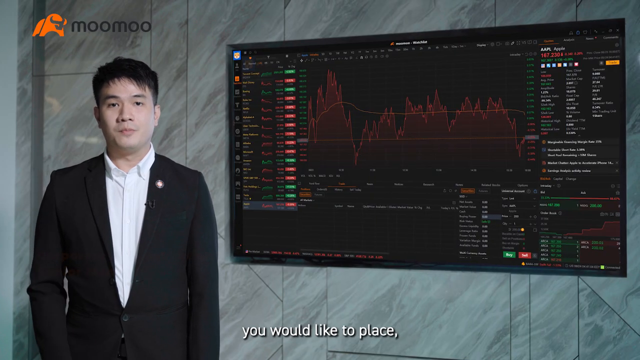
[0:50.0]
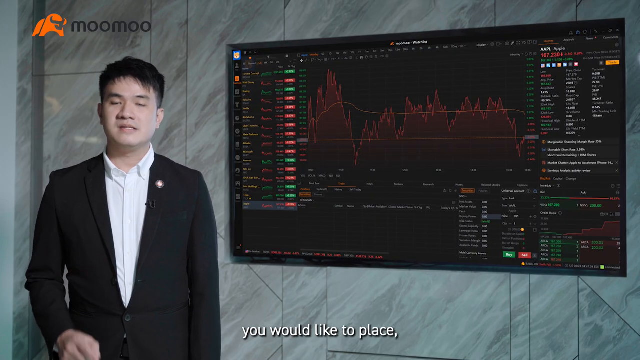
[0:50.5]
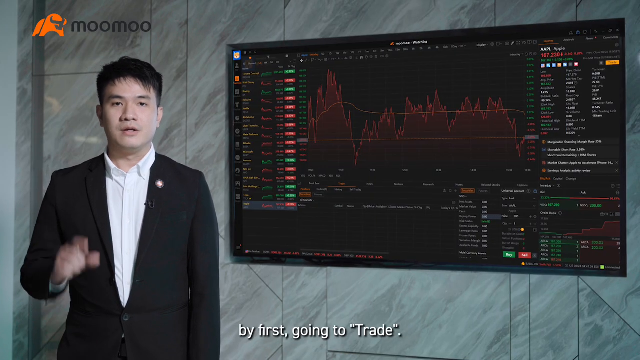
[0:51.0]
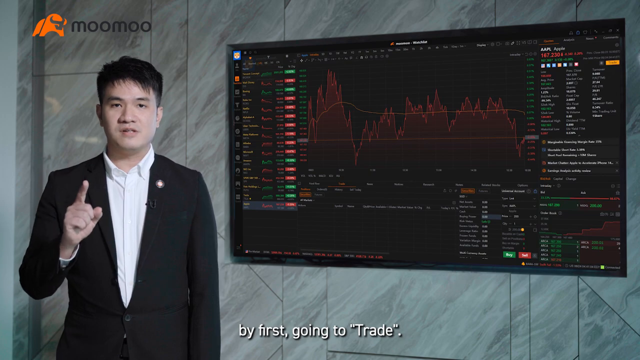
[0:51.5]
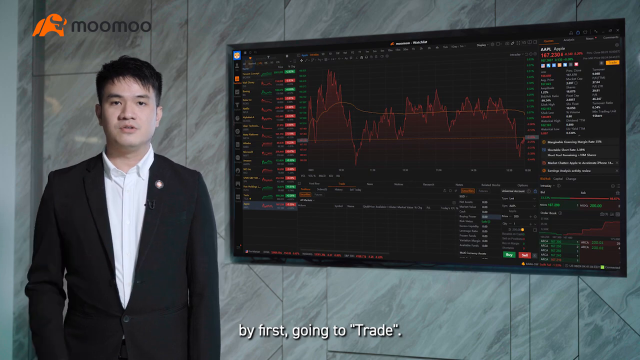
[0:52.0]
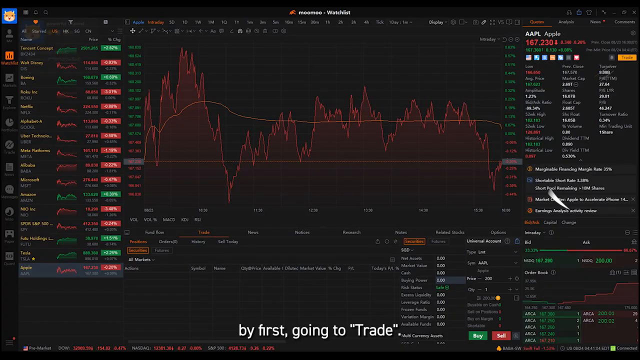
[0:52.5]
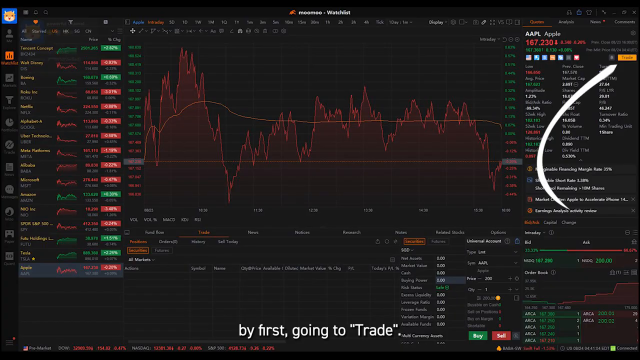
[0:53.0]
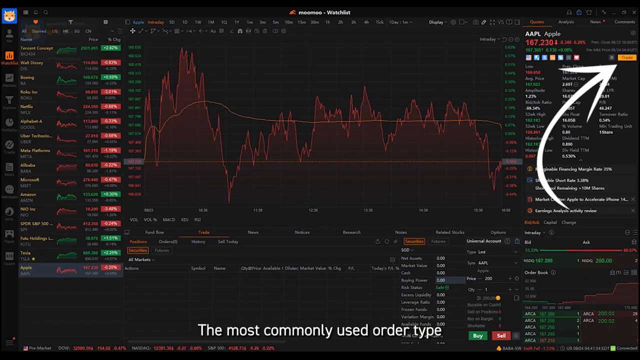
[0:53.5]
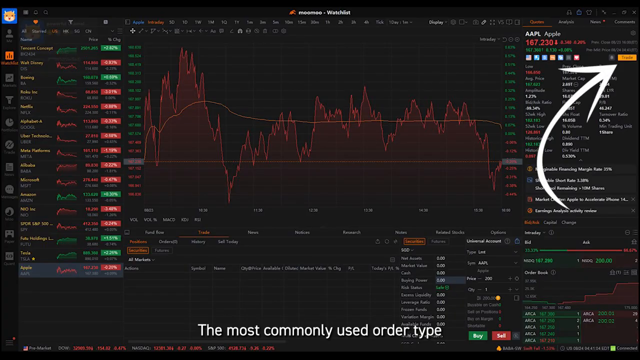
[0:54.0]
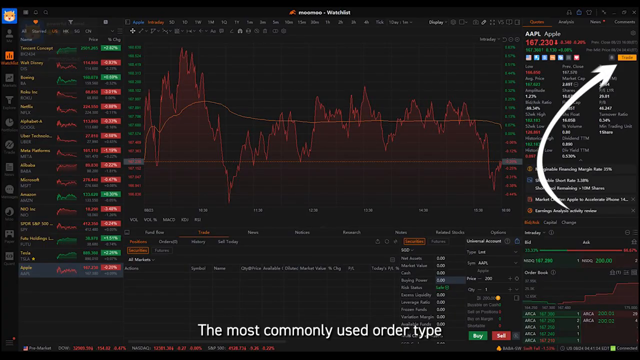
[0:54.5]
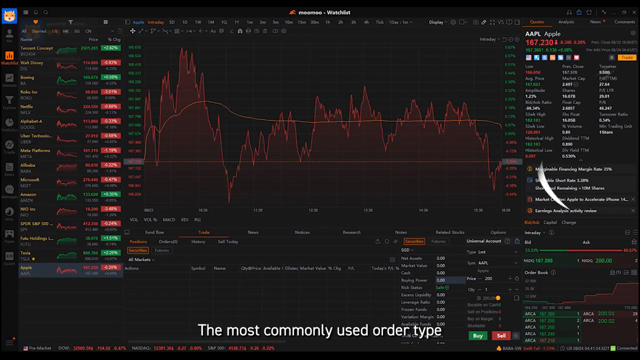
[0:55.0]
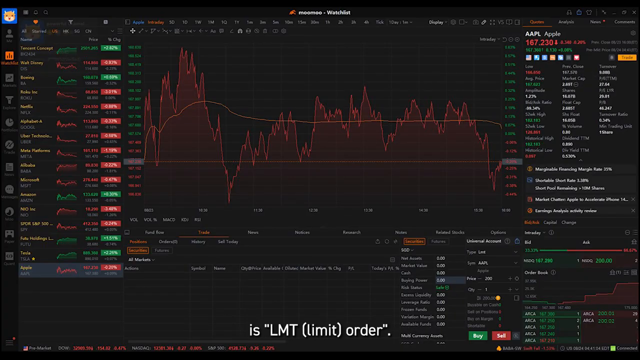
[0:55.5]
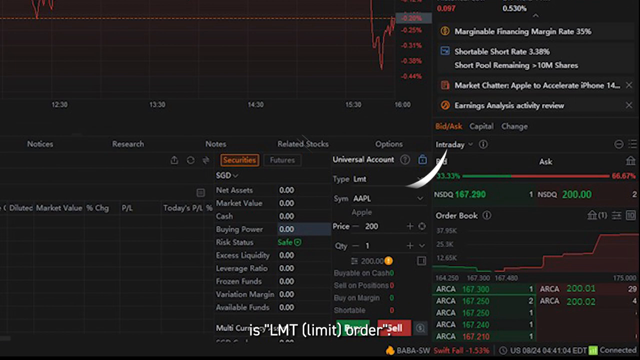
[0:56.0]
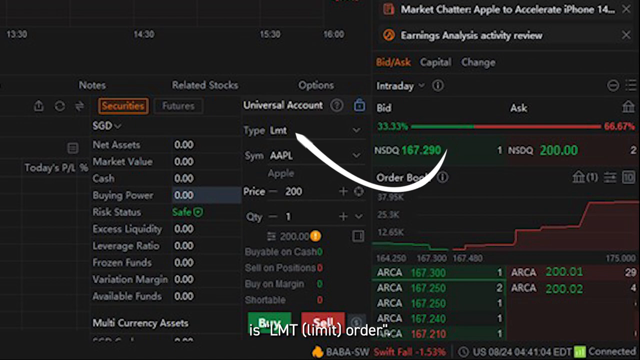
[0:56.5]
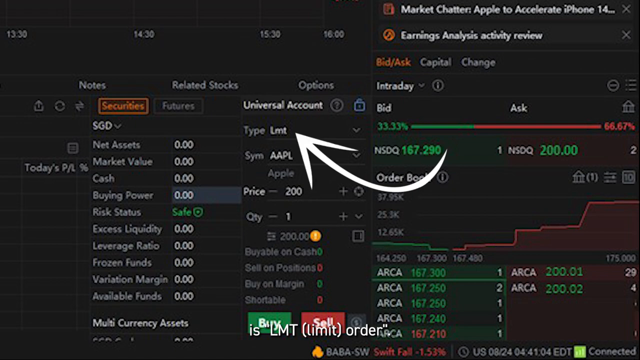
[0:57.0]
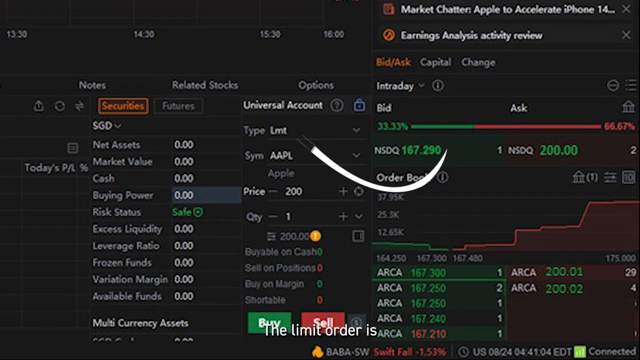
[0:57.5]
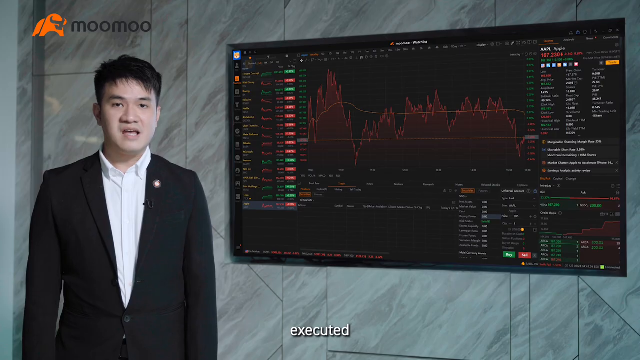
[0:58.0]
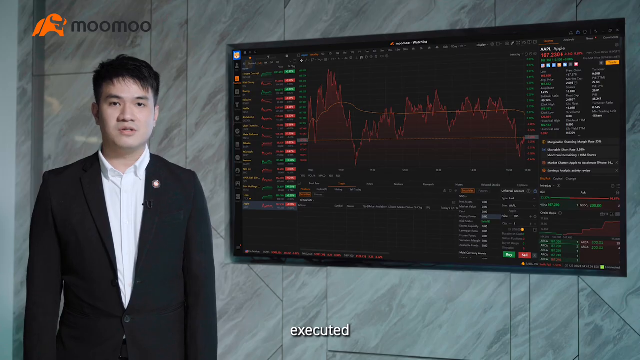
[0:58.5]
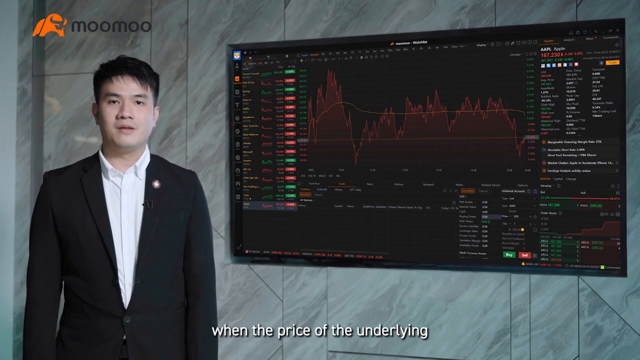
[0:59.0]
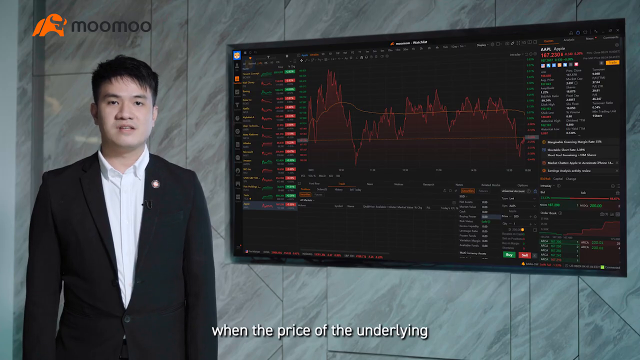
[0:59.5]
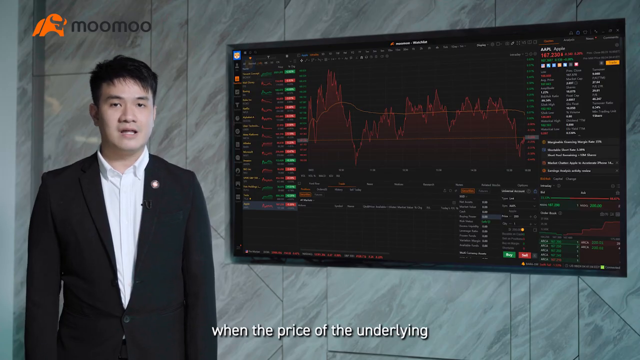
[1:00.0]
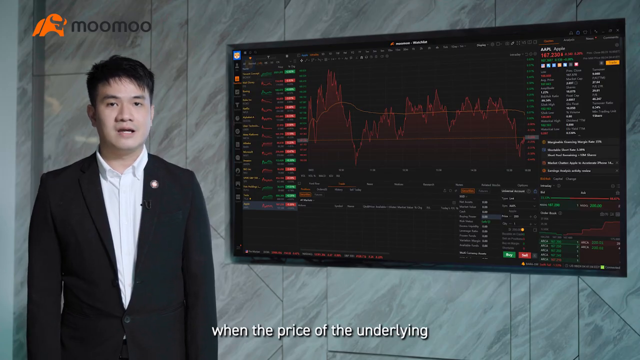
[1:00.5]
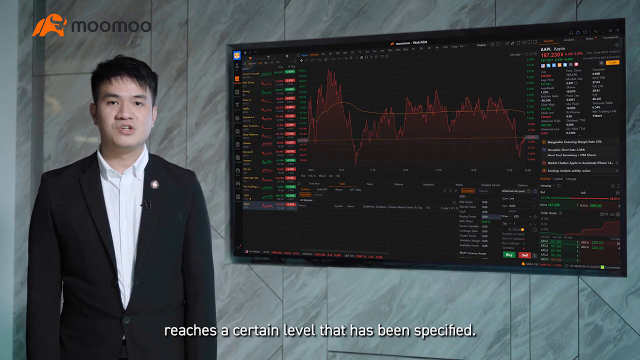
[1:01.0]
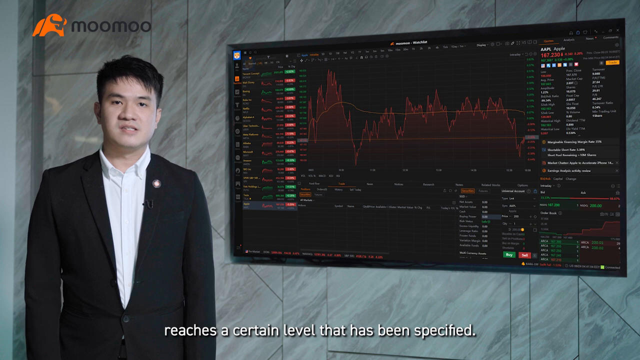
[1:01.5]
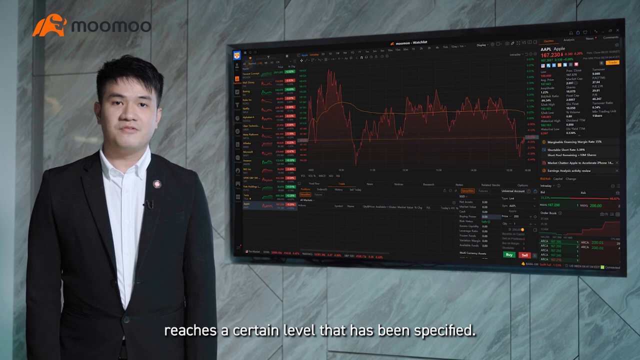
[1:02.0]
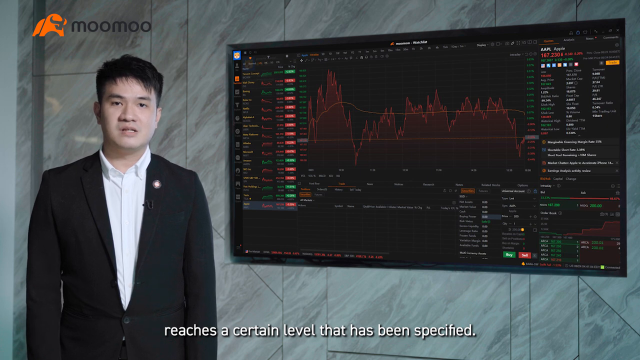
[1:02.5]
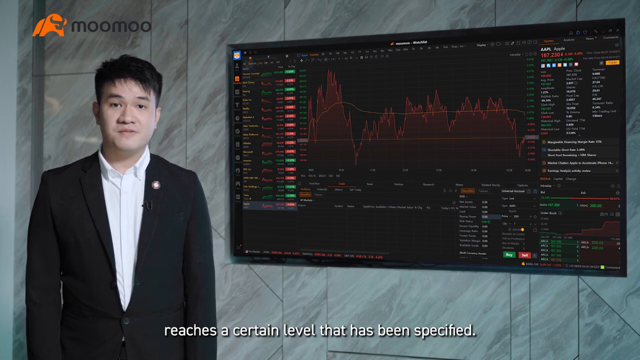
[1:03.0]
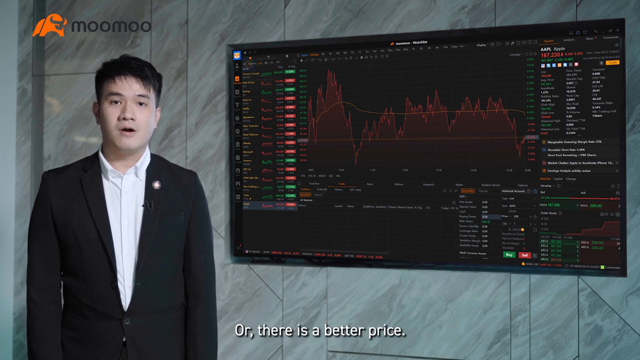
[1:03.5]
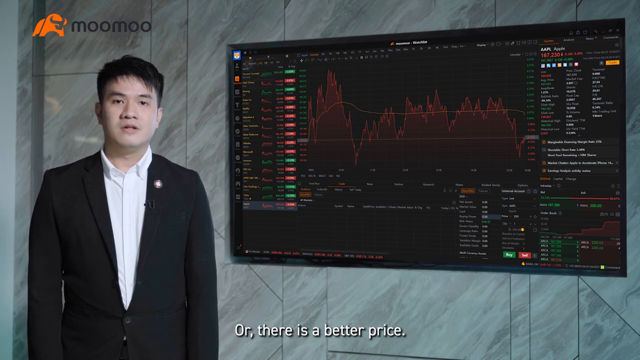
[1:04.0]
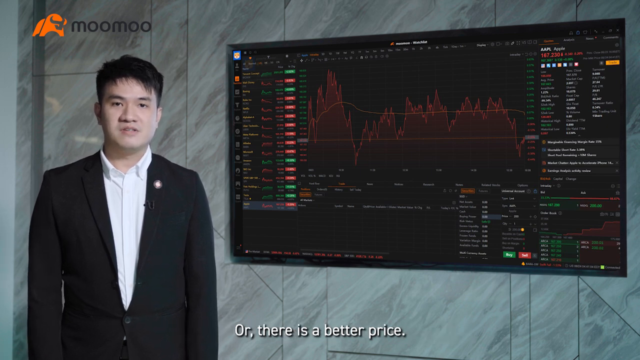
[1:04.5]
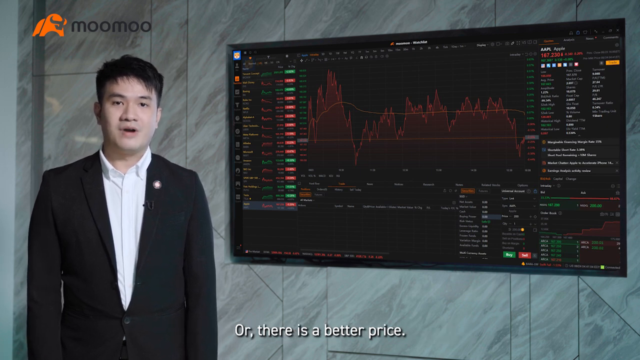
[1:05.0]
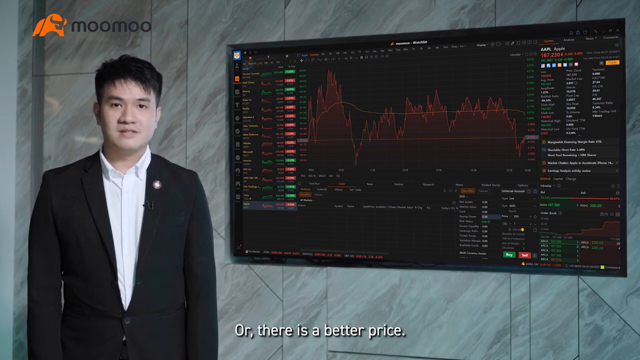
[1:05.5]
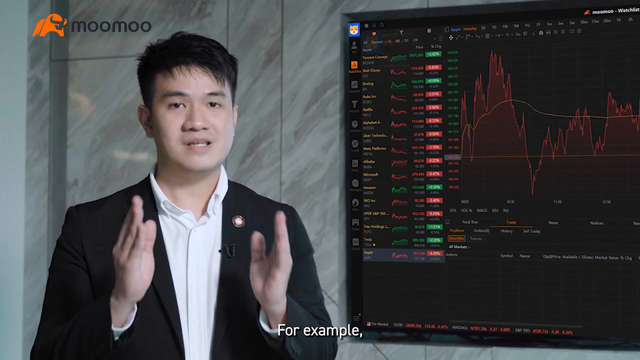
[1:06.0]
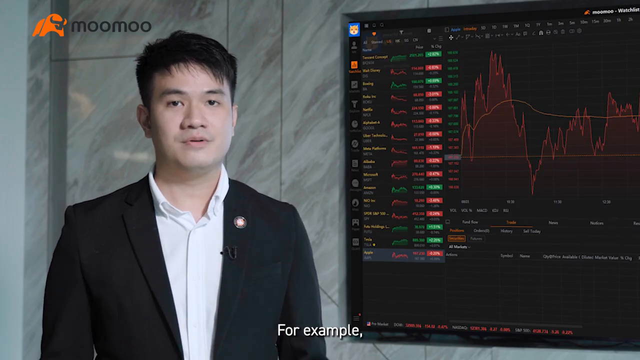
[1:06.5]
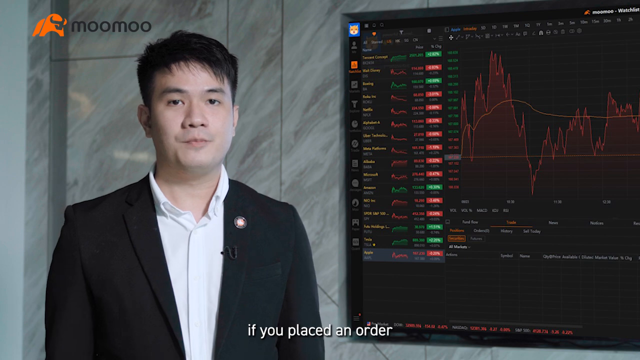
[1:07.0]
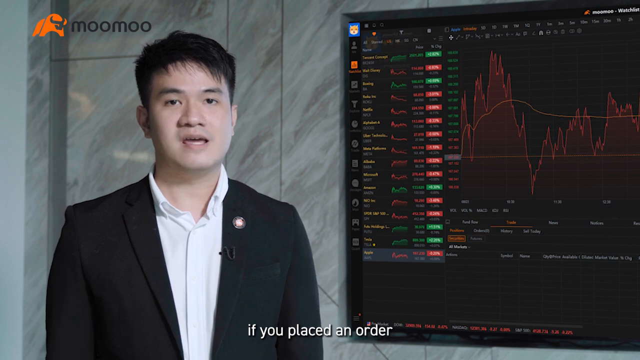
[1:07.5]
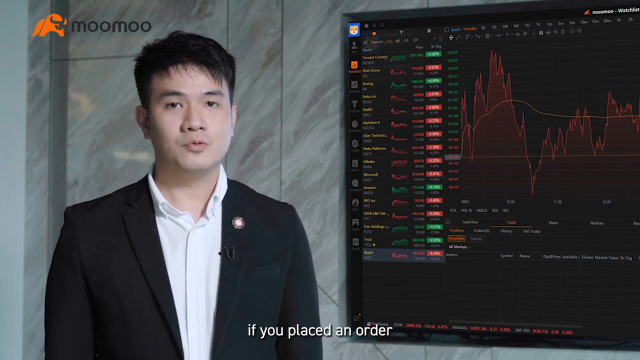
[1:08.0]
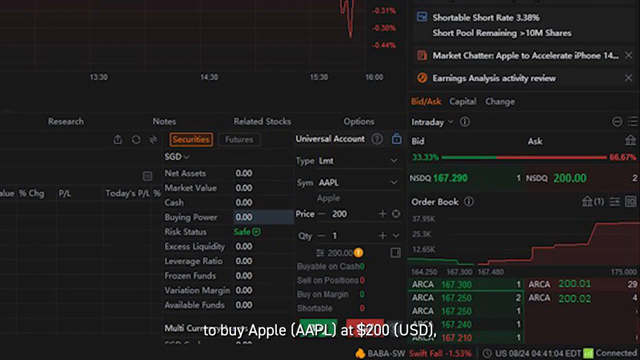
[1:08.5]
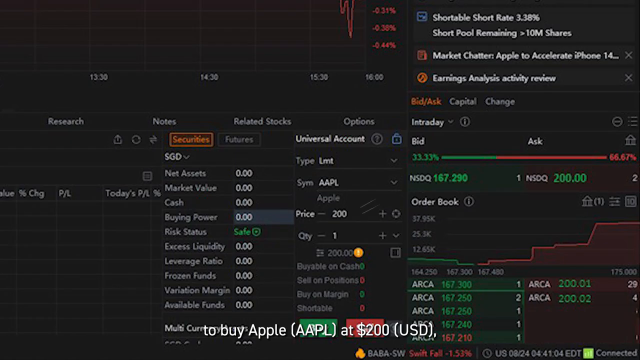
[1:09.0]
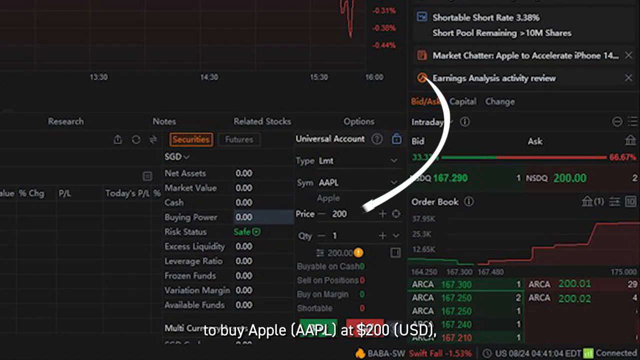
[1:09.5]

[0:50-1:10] Lee Yong talks about how trading works on the app. The view zooms in on the top right corner of the screen, which shows how to place an order and how to trade. Arrows highlight the directions as the view zooms in on them, and the screen appears to show how to set a specific price at which to buy a stock or asset. The view then zooms back out to Lee as he keeps explaining. The TV screen he presents from appears to be mounted on a grayish marble wall with darker gray accents running at an angle across it, and the app on the screen appears to carry quite a bit of information.